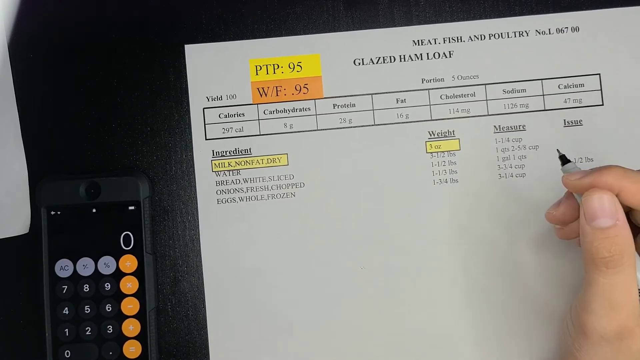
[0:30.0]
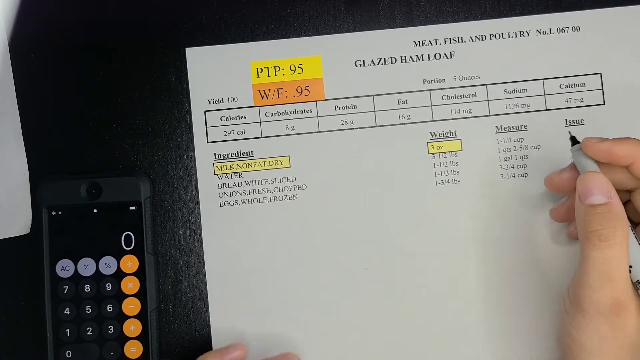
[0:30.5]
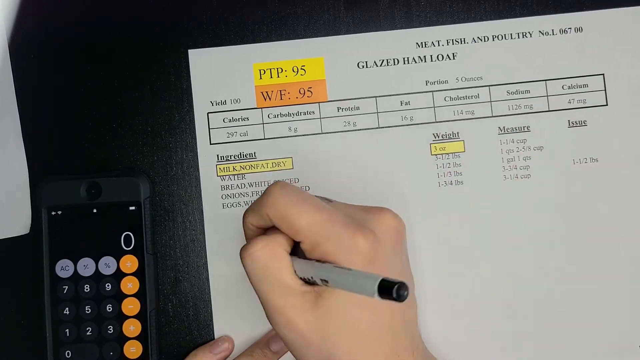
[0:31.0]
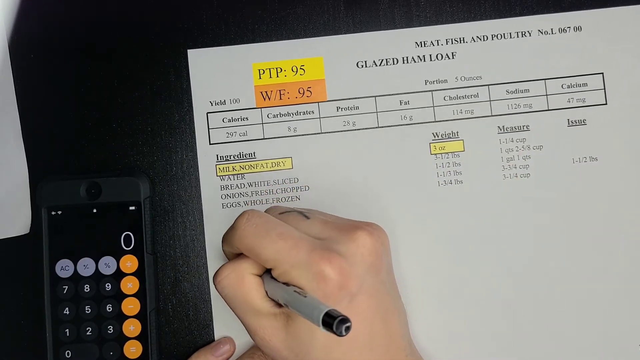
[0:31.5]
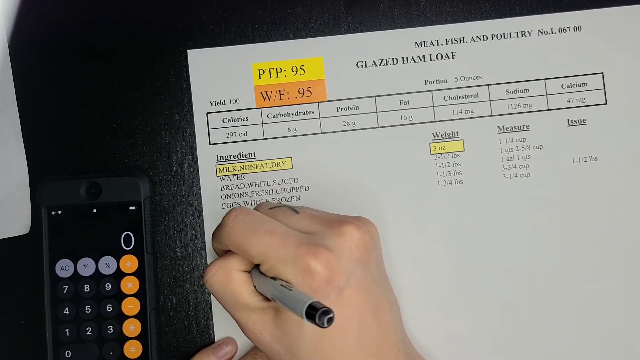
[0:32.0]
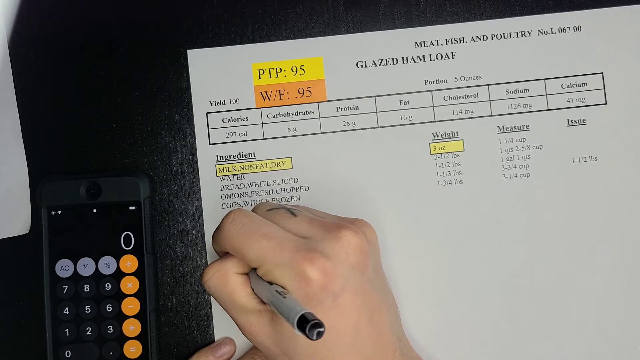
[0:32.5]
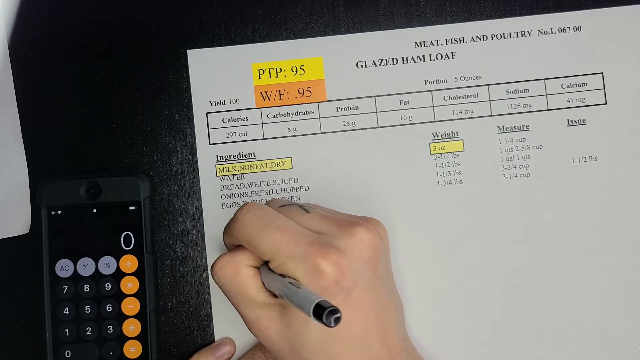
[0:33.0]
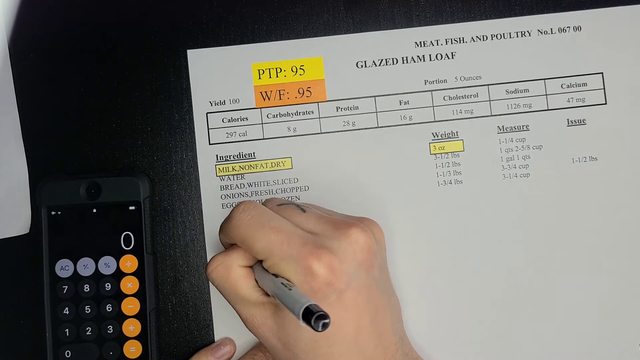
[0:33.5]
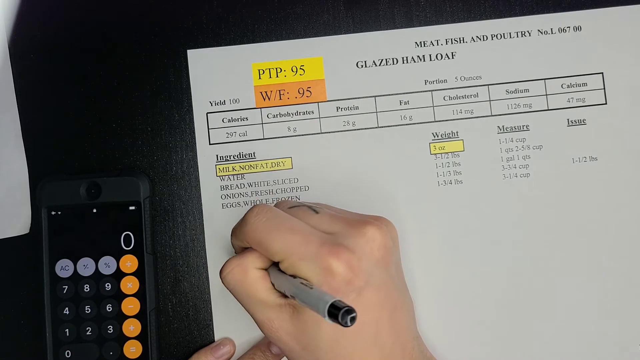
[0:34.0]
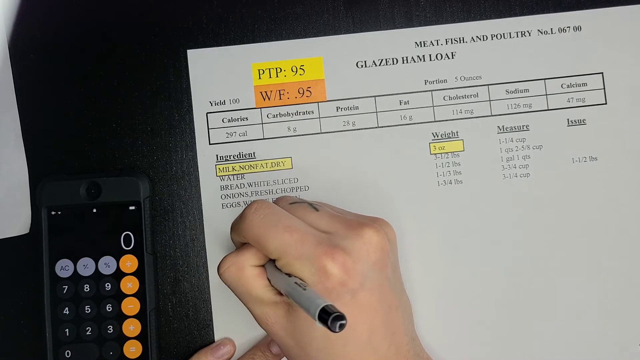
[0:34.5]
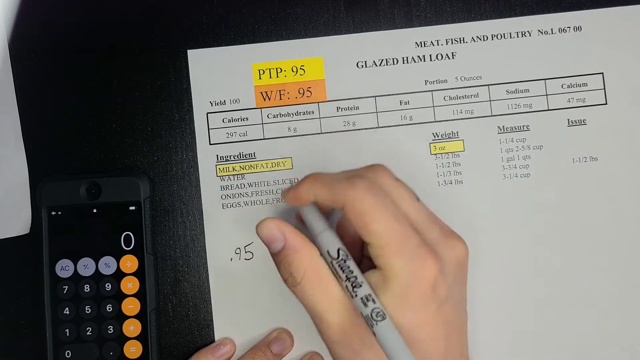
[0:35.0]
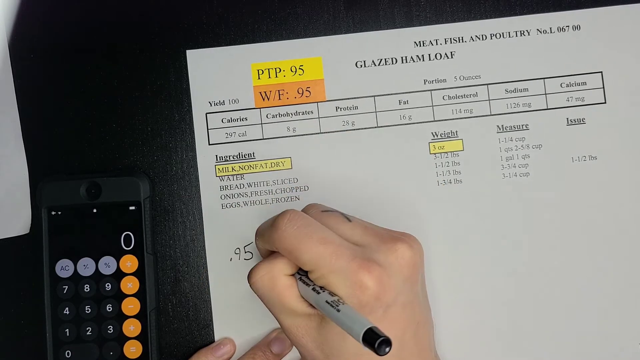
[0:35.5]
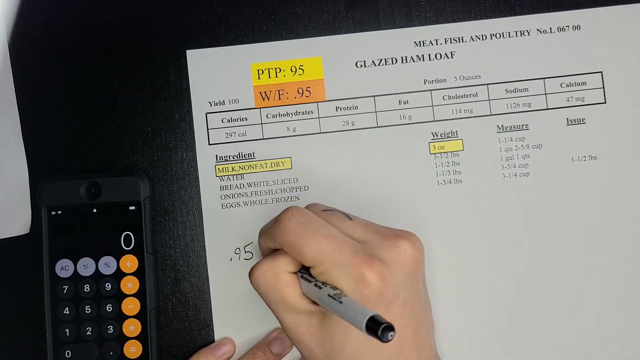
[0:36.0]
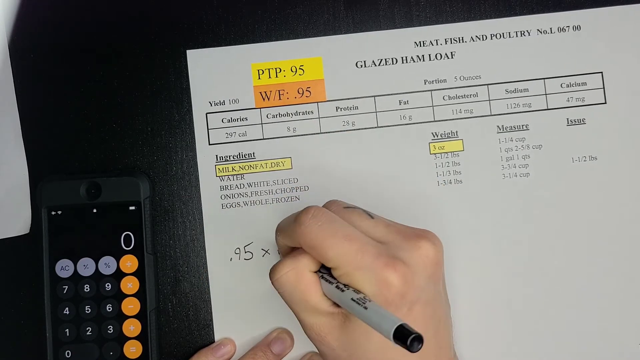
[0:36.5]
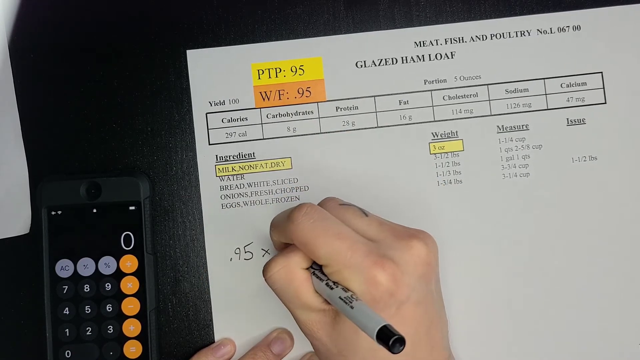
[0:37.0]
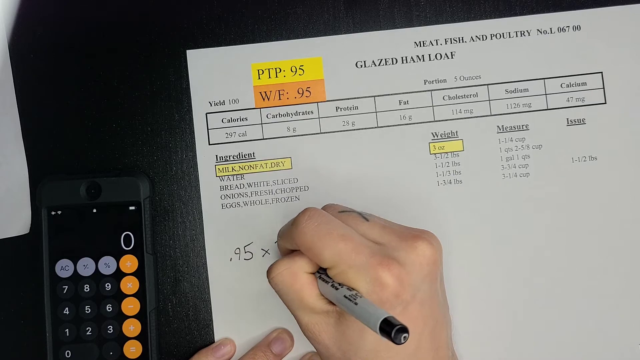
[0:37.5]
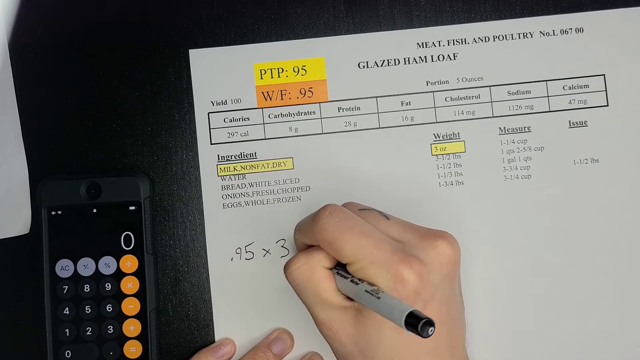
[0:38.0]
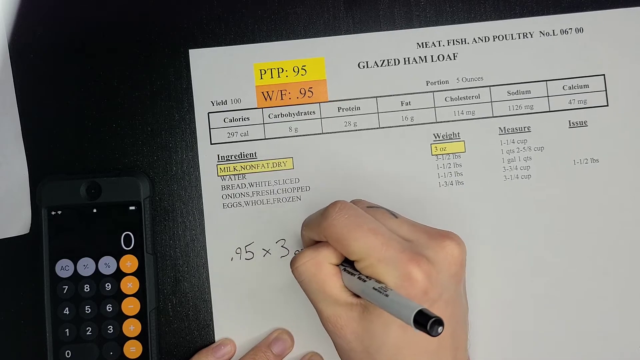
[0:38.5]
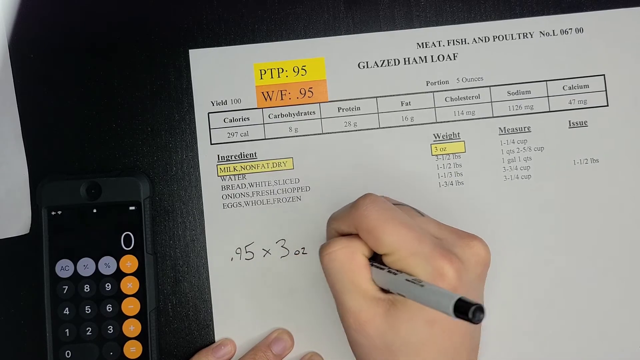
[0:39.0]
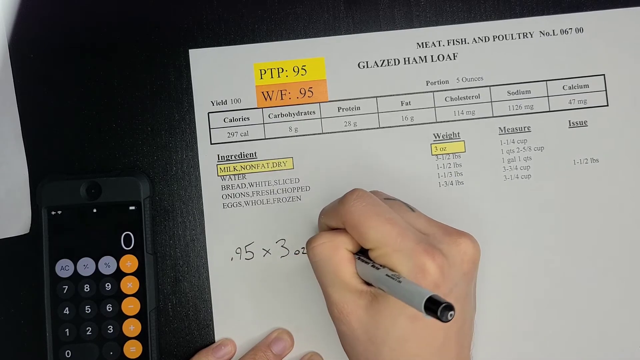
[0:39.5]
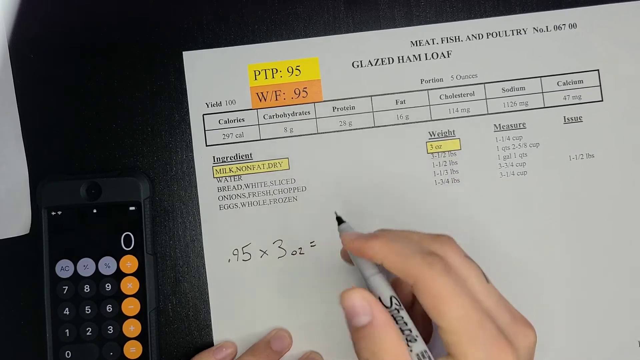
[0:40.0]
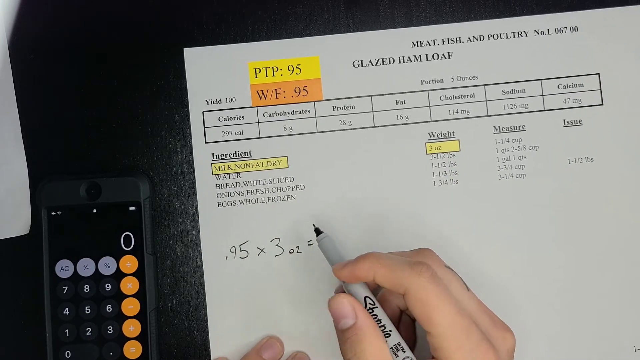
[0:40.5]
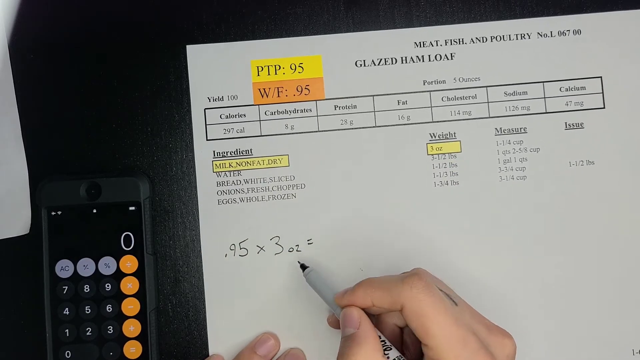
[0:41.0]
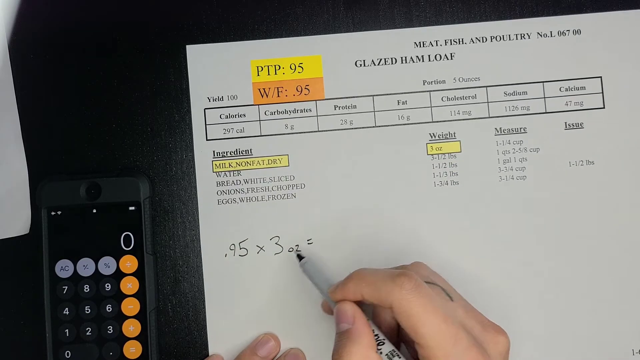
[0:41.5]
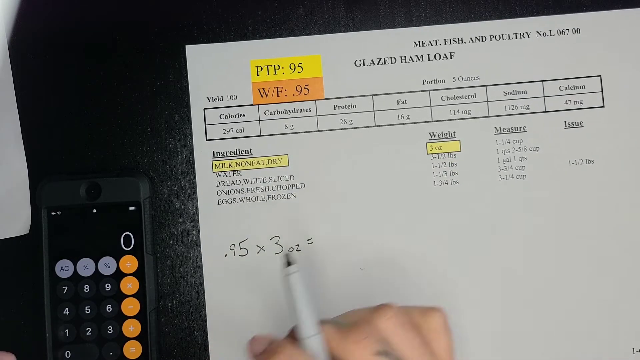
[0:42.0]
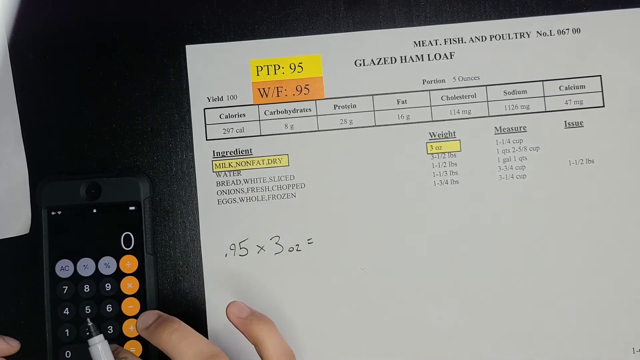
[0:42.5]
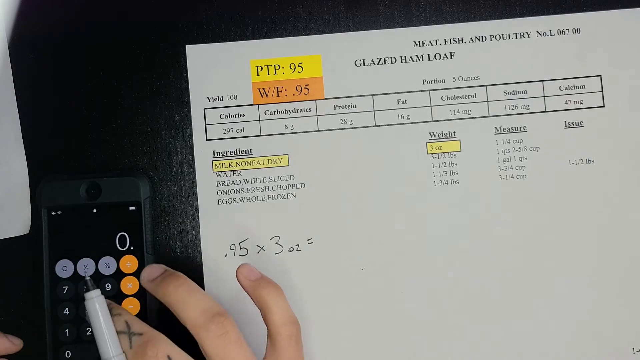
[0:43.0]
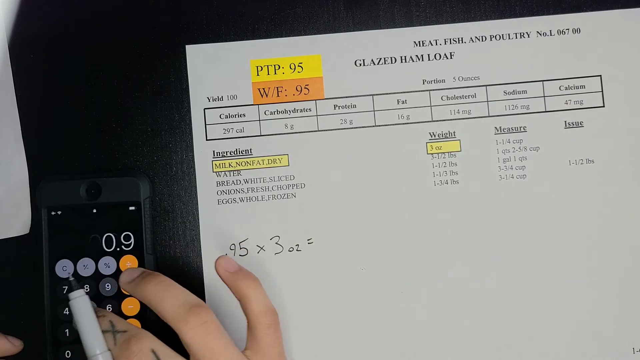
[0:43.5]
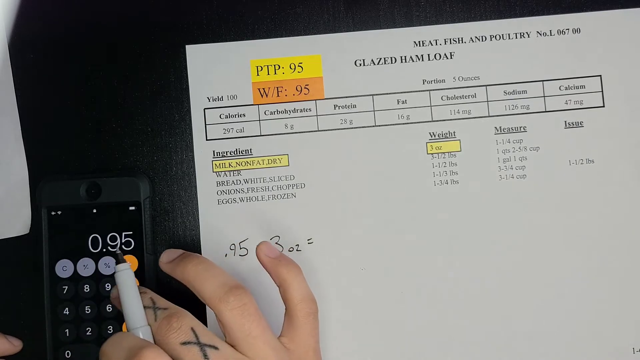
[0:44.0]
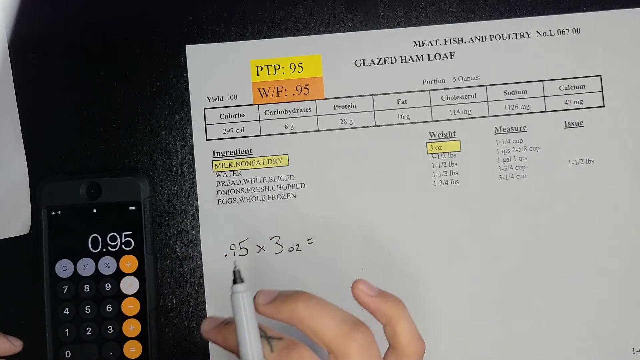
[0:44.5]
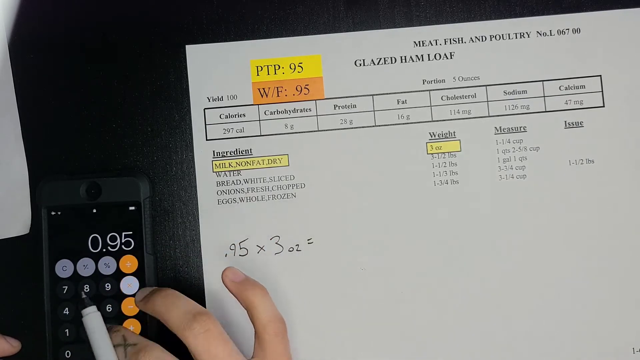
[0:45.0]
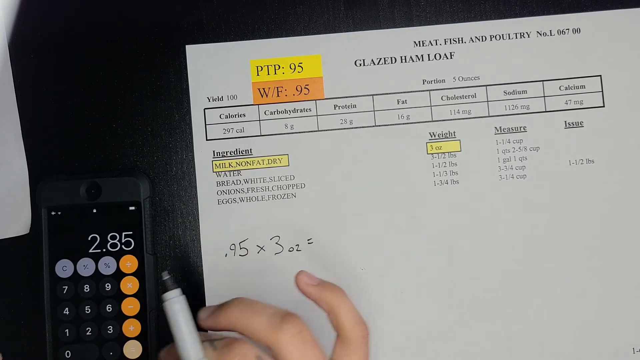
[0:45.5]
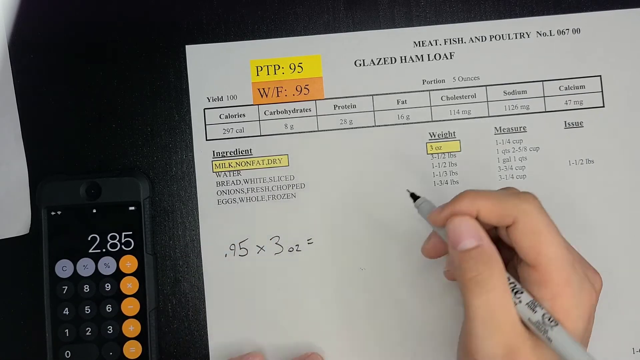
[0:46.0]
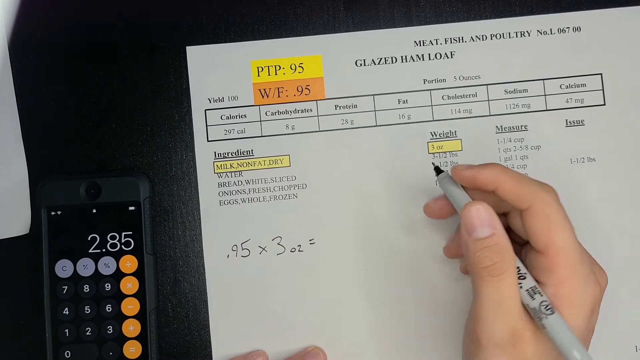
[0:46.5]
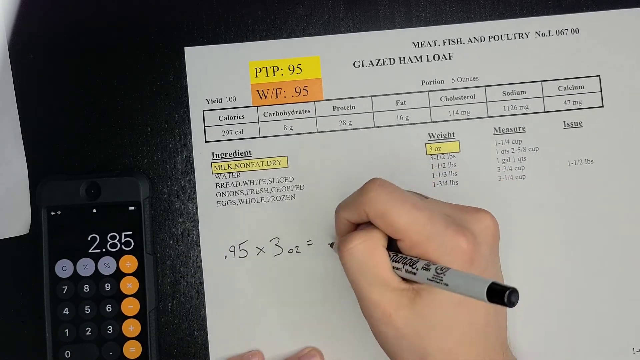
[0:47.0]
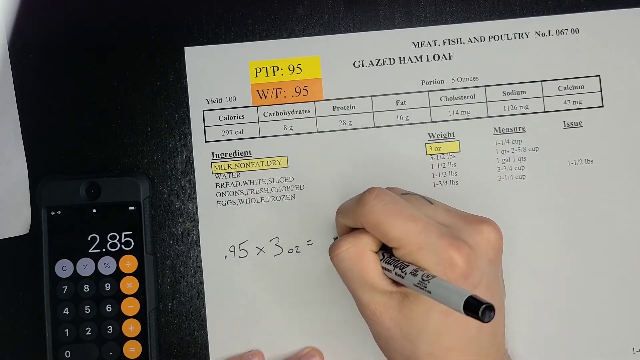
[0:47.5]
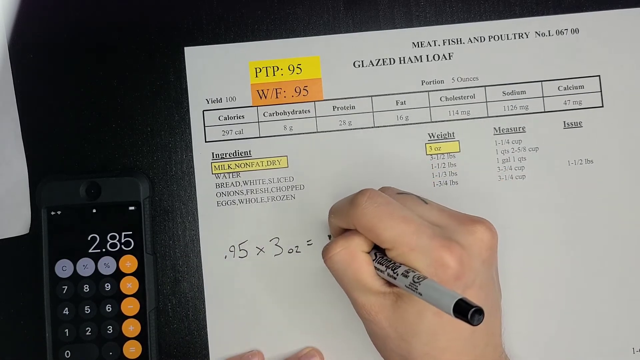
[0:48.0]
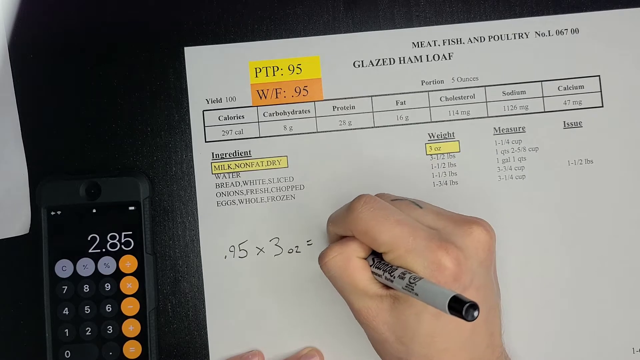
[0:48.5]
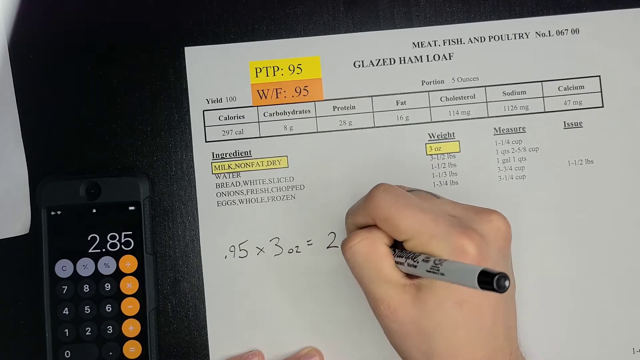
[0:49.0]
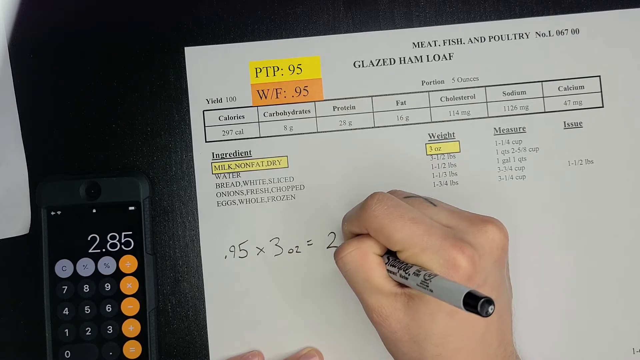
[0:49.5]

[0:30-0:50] The ingredients are shown while the person writes and works out 0.95 times 3 on a calculator. The glazed ham loaf sheet shows the number 1.06700, a yield of 100, a PTP of 95 and a W/F. The different ingredients are listed with their calories, carbohydrates and proteins. The milk, non-fat and dry, at 3 oz is multiplied by the PTP of 0.95, with each ingredient's weight to be multiplied by 0.95 in the same way.